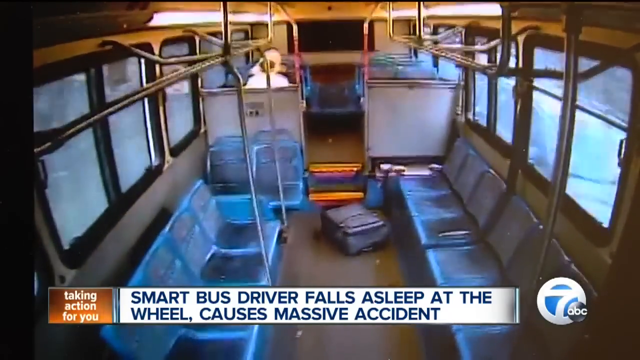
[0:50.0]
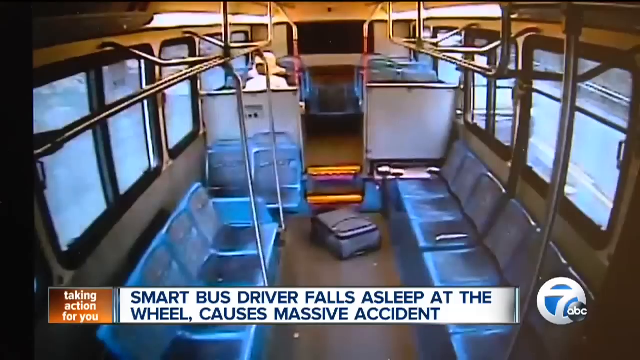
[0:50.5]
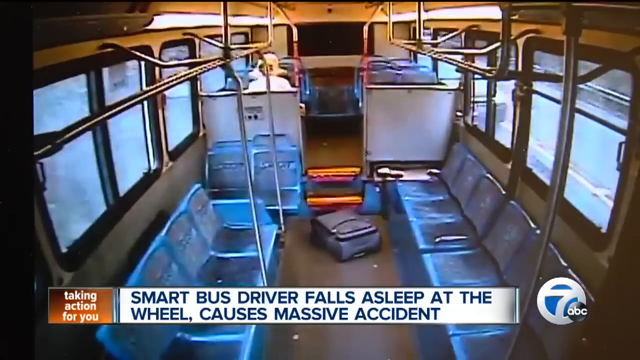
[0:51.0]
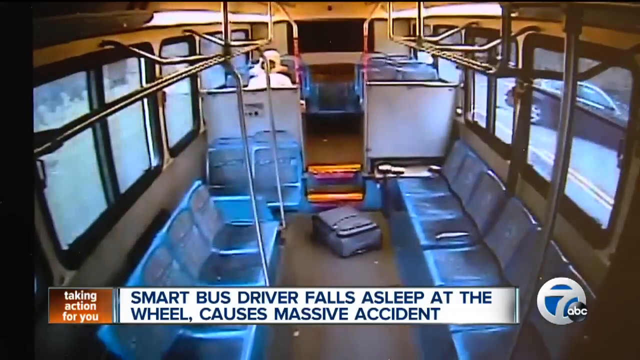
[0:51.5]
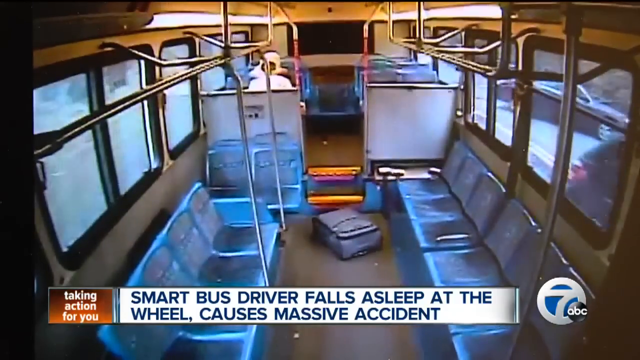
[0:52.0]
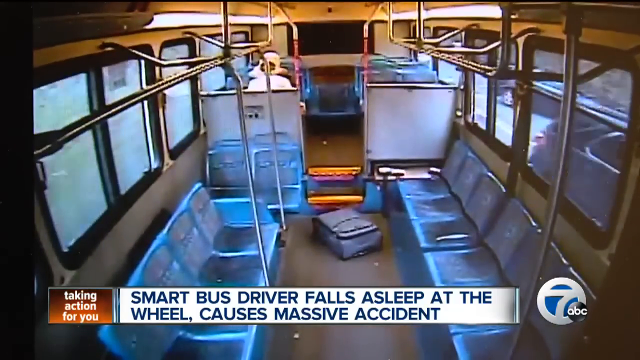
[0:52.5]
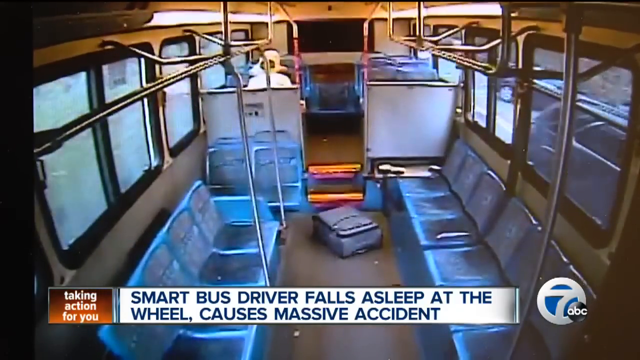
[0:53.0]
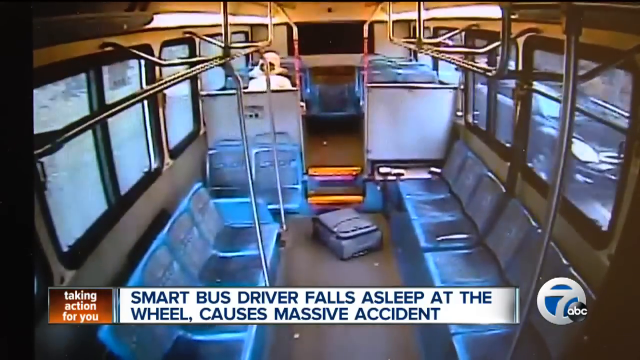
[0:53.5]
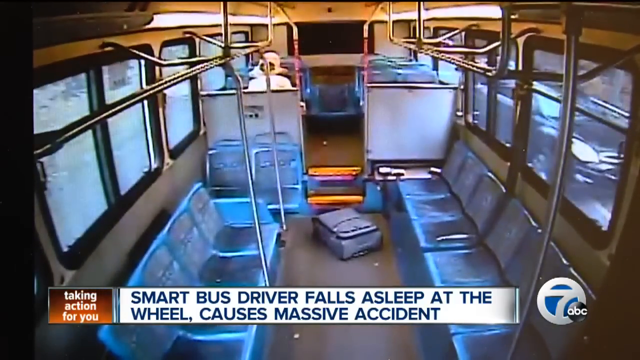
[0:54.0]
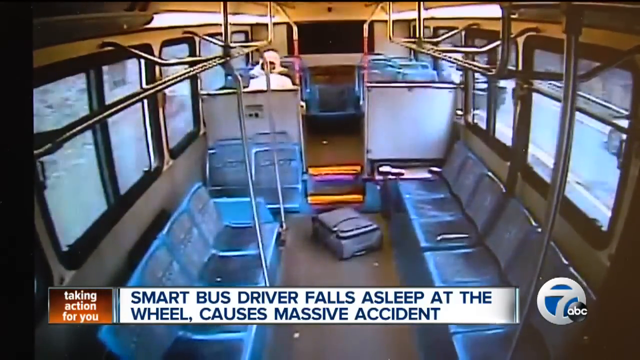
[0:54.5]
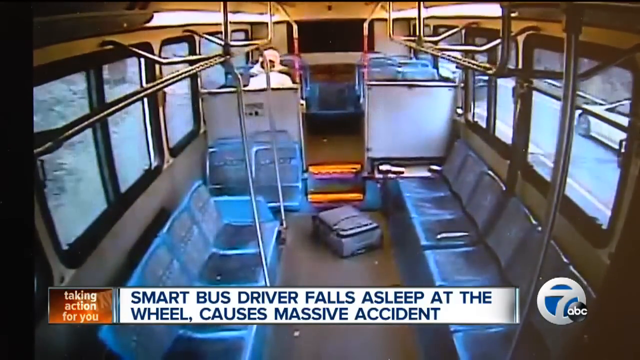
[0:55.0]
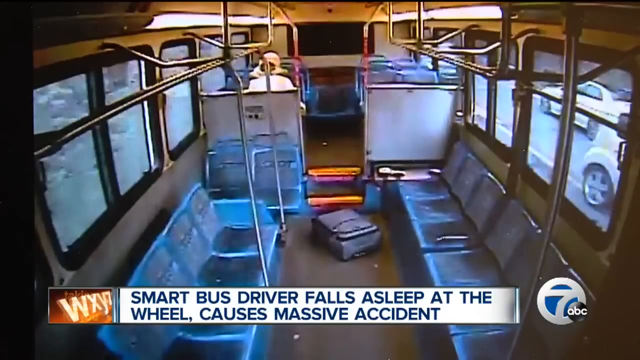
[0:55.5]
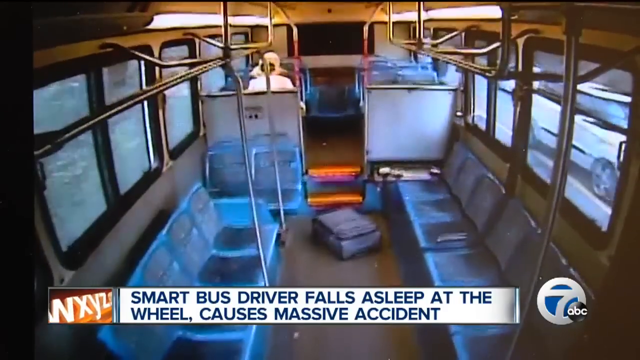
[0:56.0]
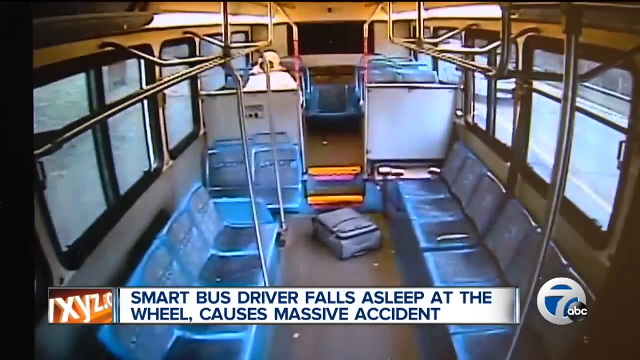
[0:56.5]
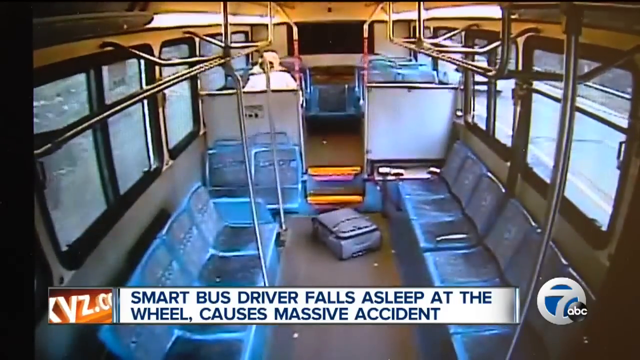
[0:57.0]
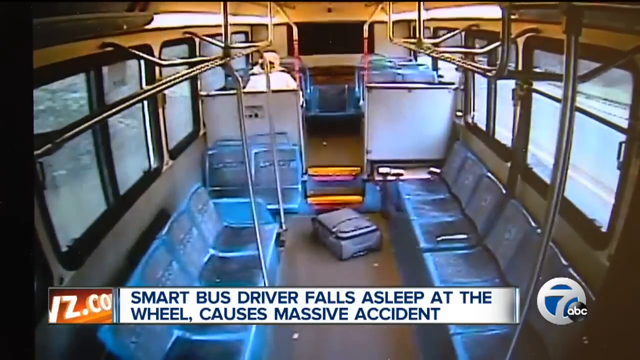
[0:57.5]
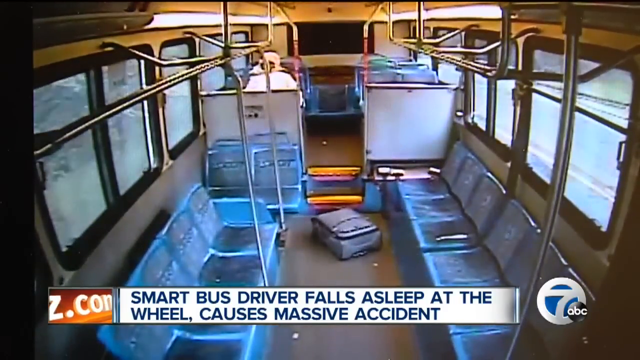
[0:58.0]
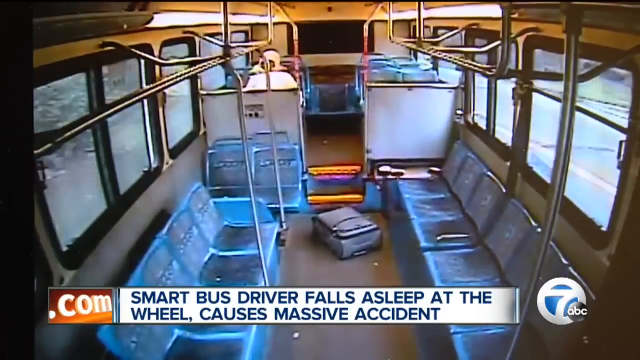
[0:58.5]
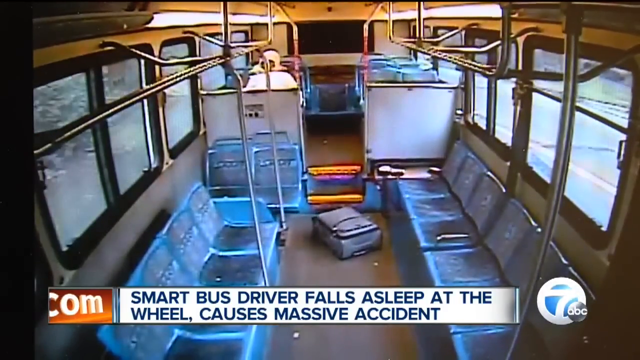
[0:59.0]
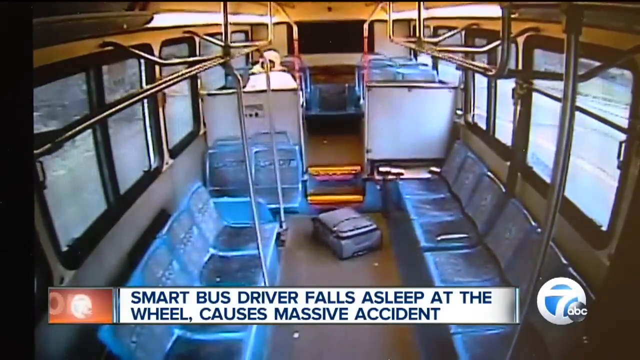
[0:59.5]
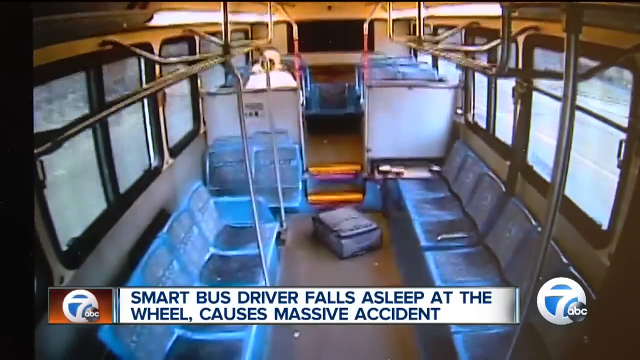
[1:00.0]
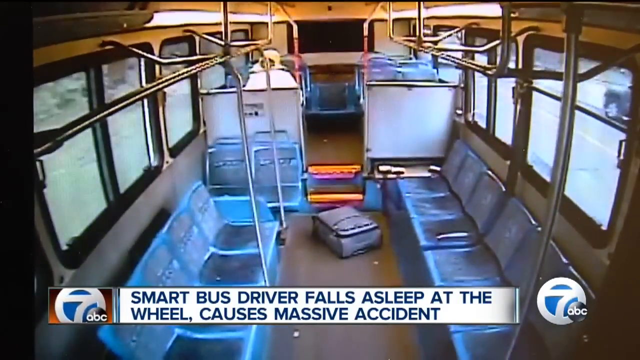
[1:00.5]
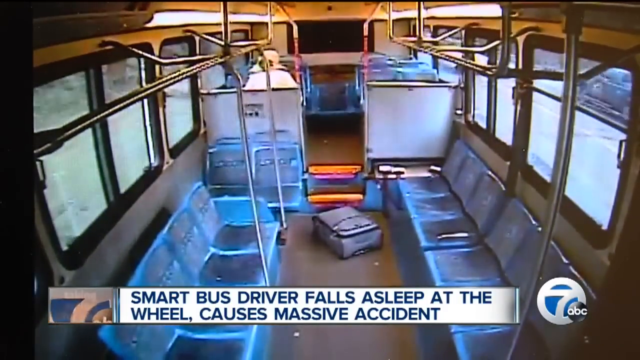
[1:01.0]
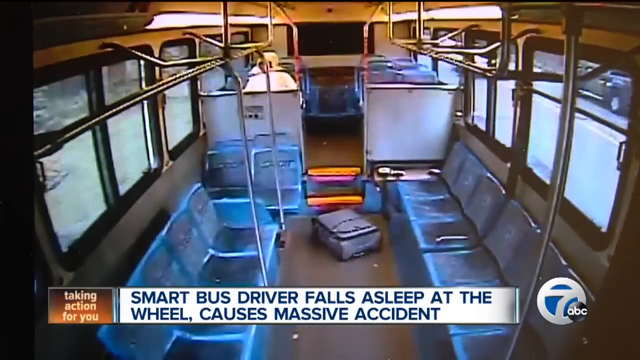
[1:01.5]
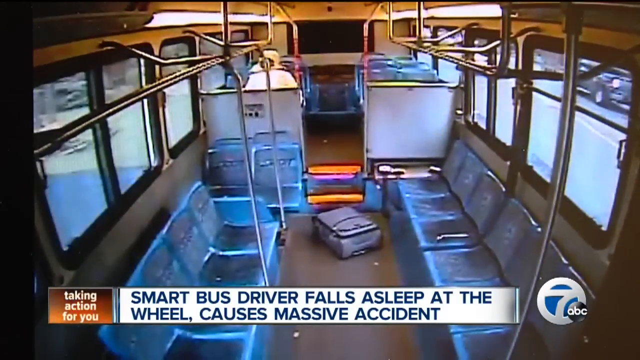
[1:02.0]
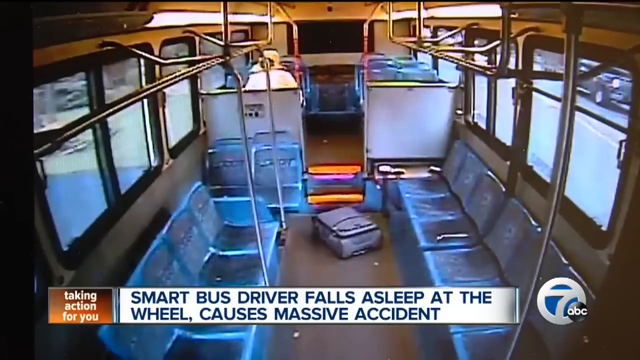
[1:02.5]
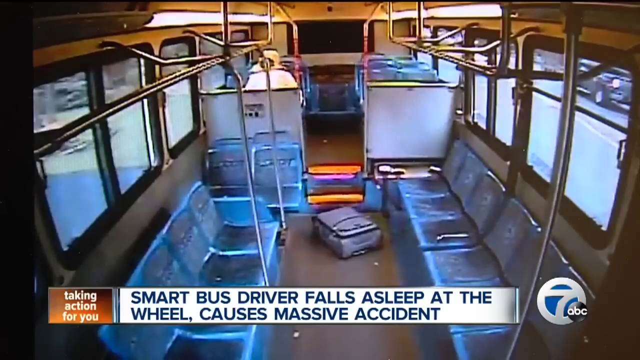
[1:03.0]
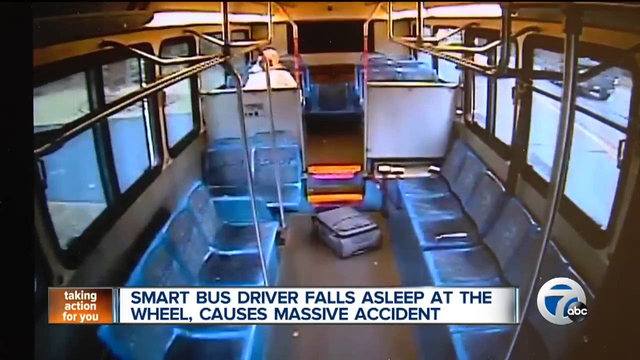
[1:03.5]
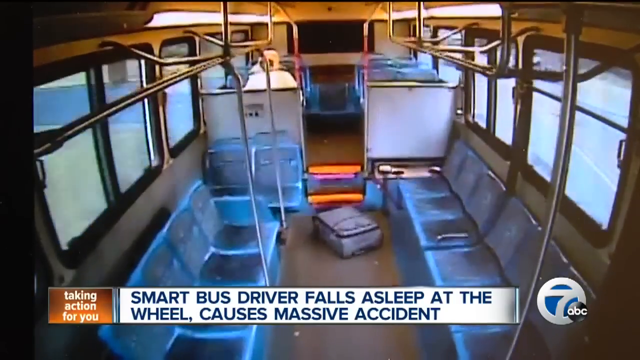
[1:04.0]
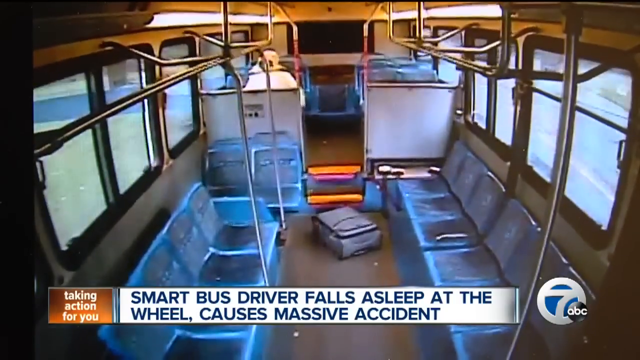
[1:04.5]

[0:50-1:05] Inside the bus, in slow motion, a suitcase is on the ground after the crash. Cars pass in the distance on the right side, with greenery on the left side. A person is at the top left; lights on the top portion of the bus illuminate the top level. The person wears a beige hat and some sort of white shirt or jacket and moves around when the crash takes place; the person apparently looks female. Many empty blue chairs are in the foreground, and the bus is essentially empty save for this one person. Orange steps go up to the higher level.